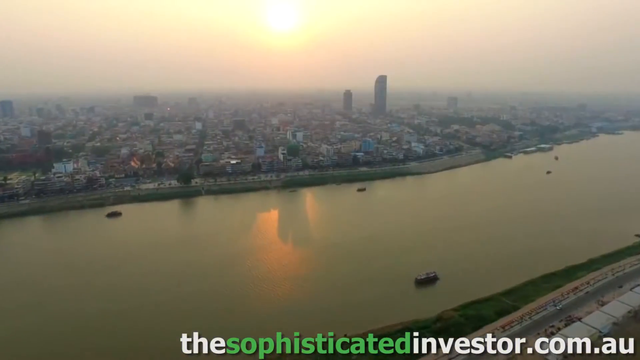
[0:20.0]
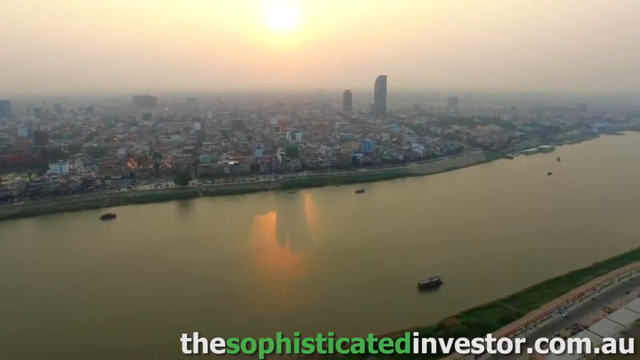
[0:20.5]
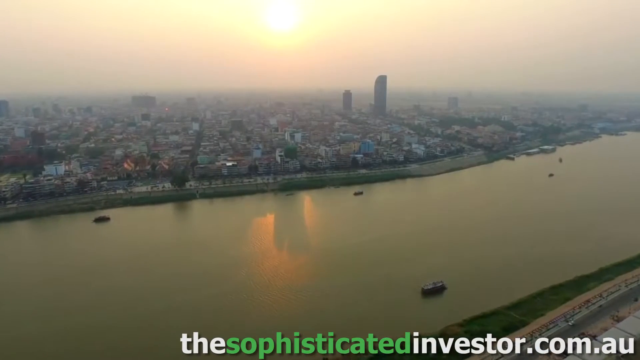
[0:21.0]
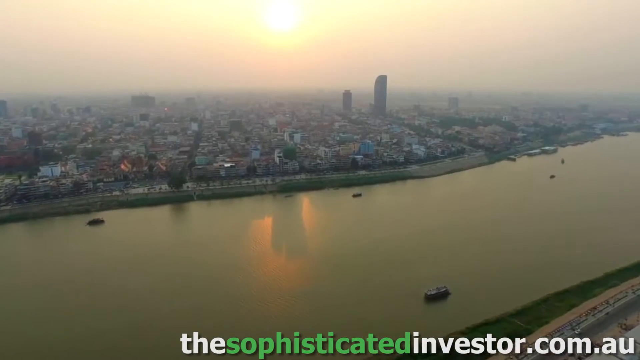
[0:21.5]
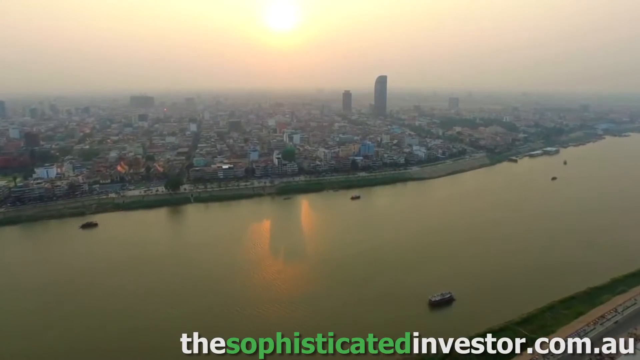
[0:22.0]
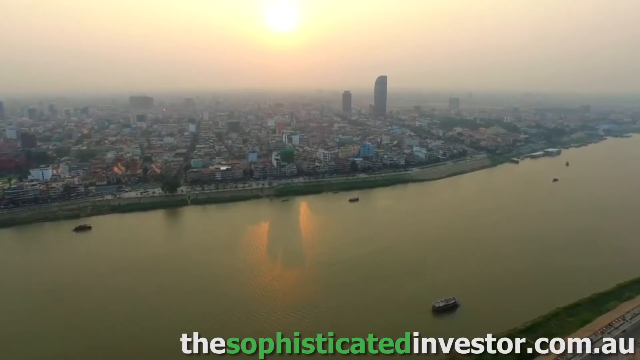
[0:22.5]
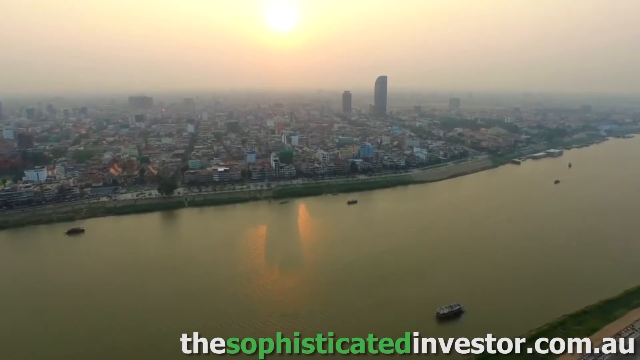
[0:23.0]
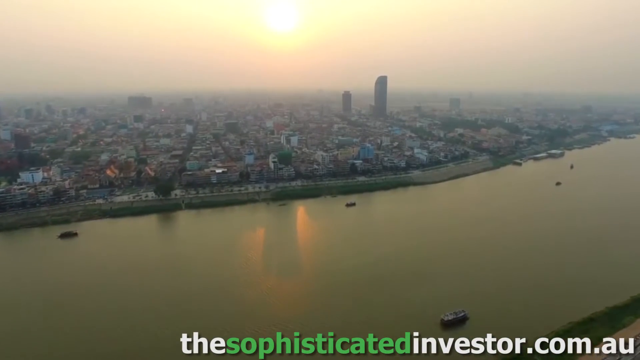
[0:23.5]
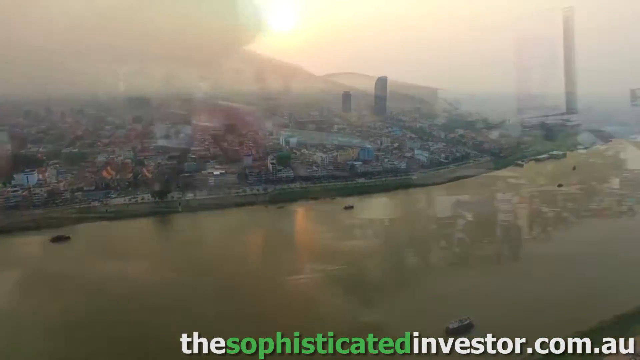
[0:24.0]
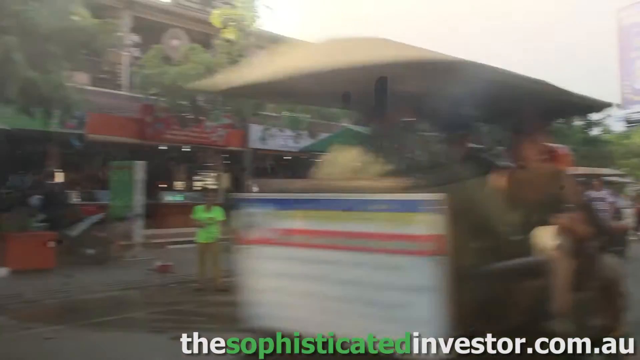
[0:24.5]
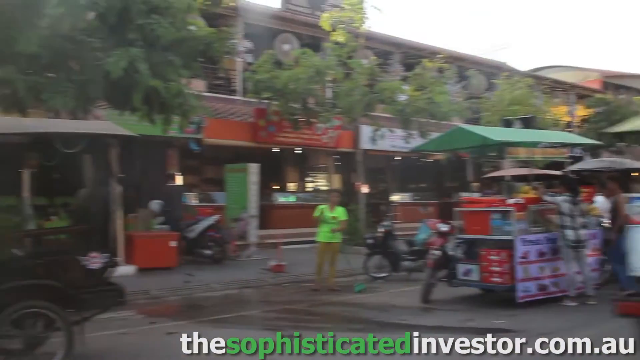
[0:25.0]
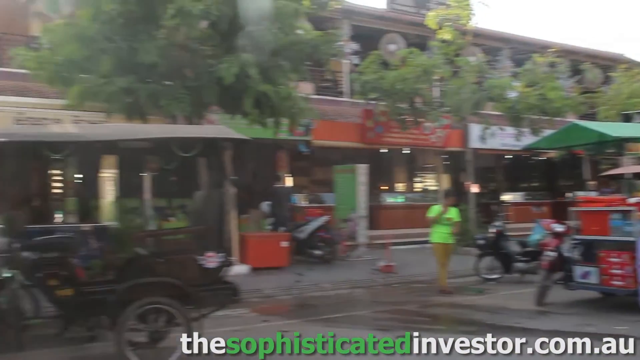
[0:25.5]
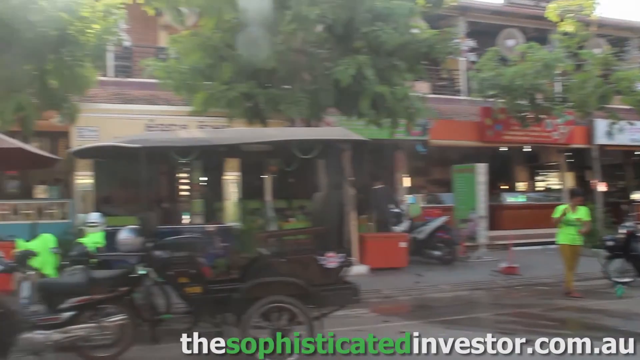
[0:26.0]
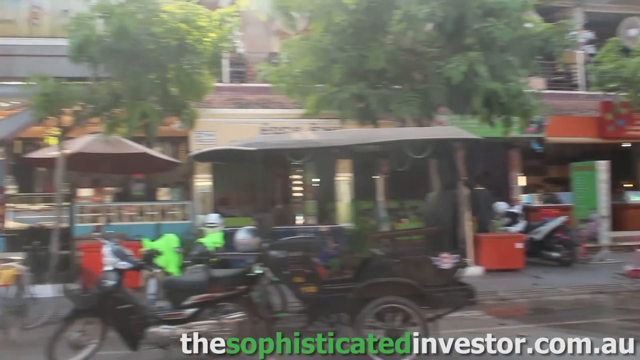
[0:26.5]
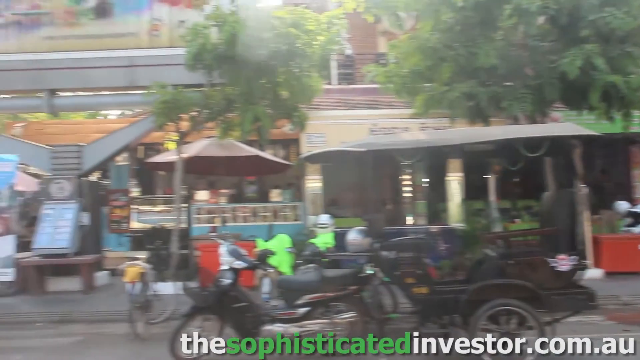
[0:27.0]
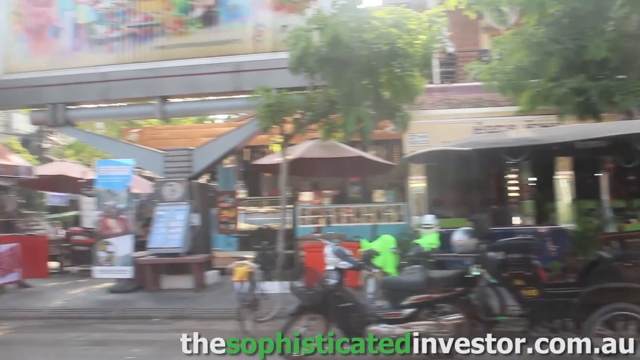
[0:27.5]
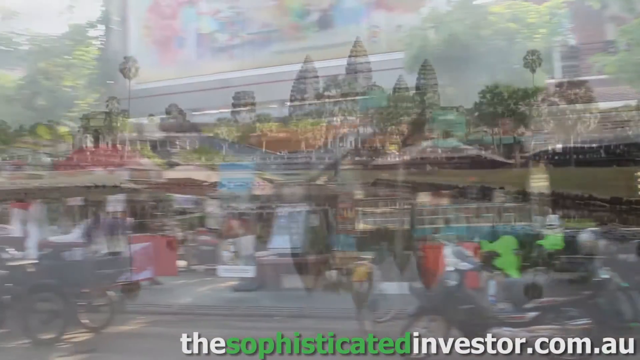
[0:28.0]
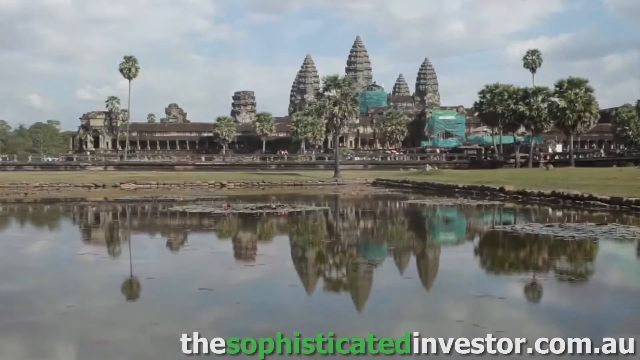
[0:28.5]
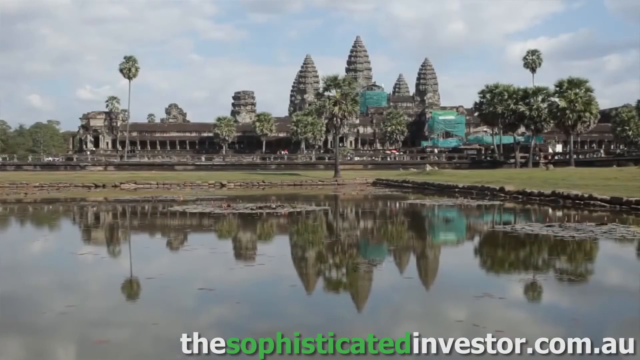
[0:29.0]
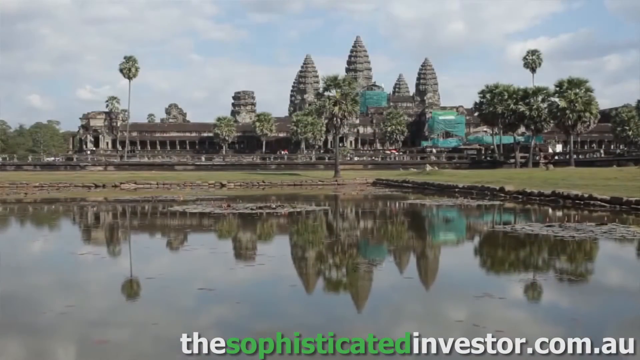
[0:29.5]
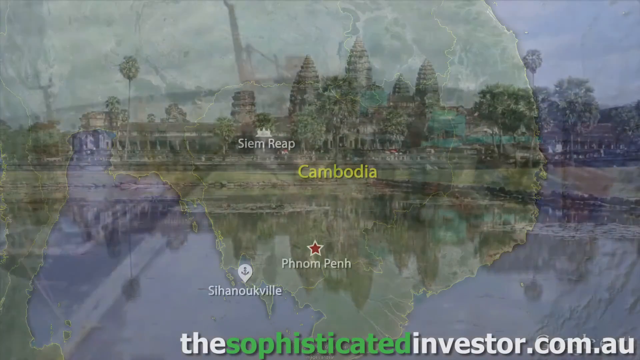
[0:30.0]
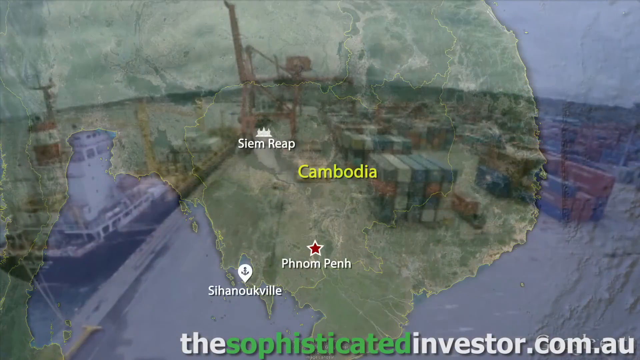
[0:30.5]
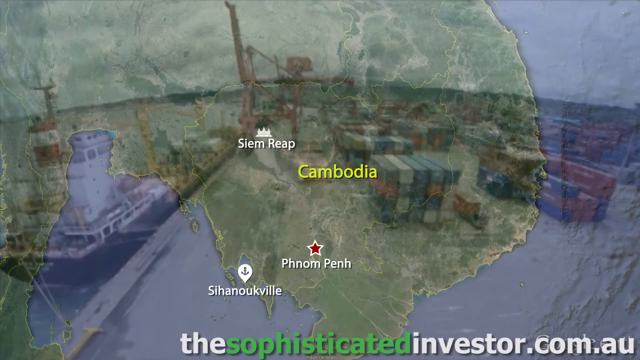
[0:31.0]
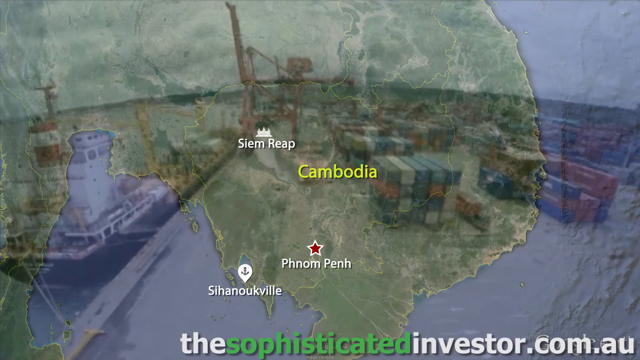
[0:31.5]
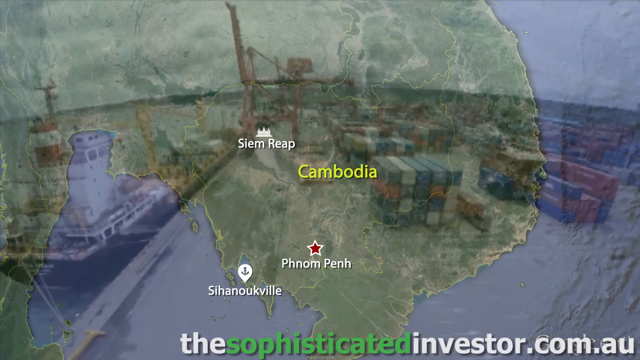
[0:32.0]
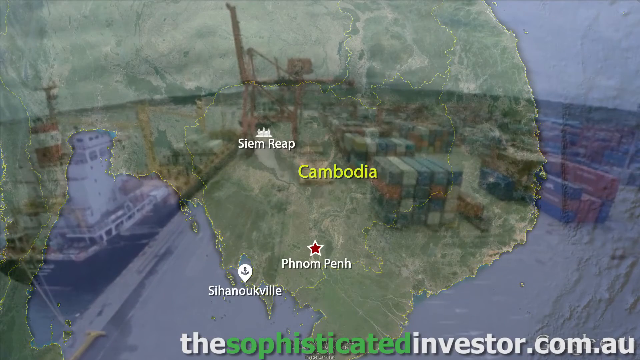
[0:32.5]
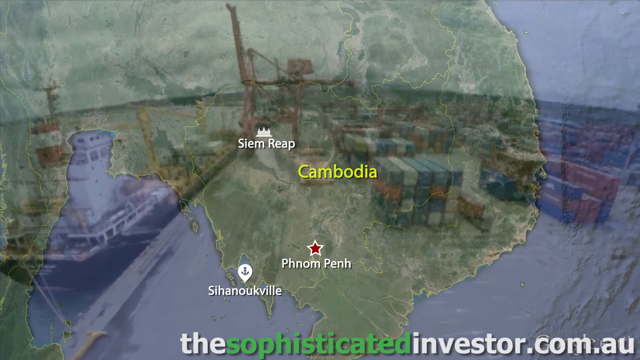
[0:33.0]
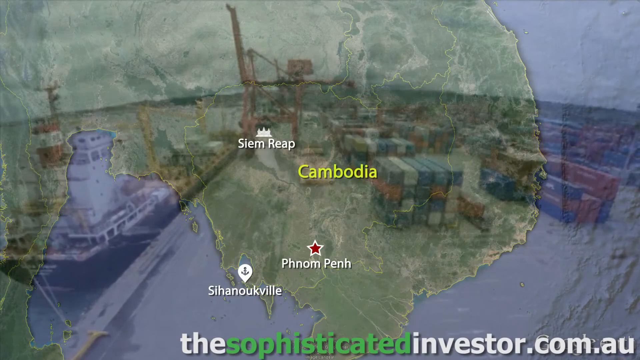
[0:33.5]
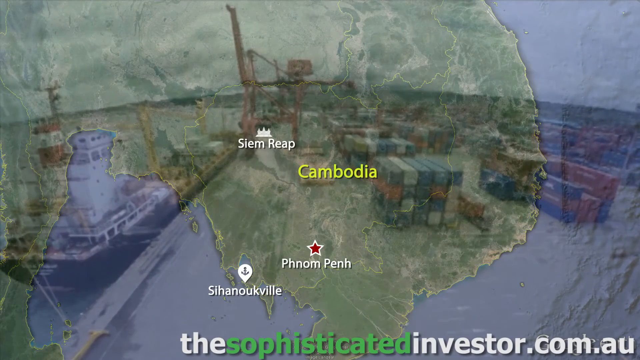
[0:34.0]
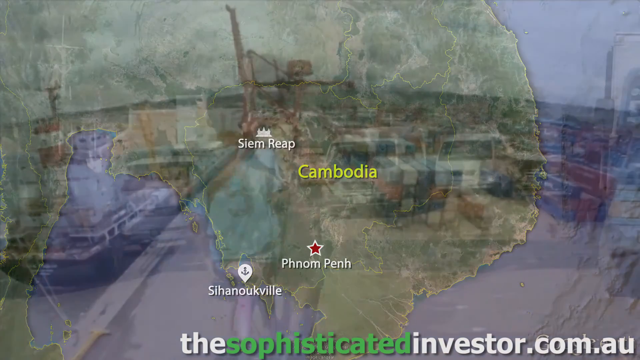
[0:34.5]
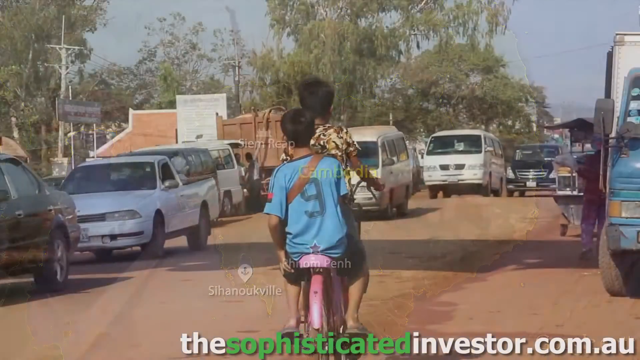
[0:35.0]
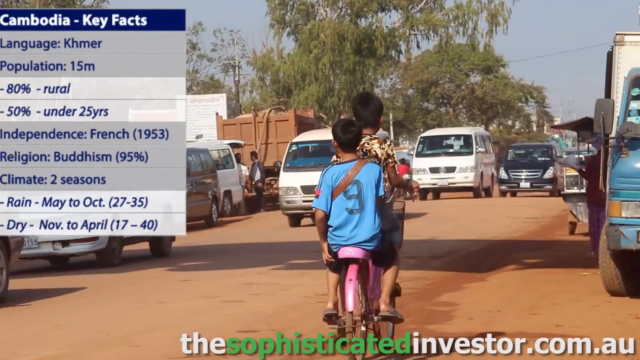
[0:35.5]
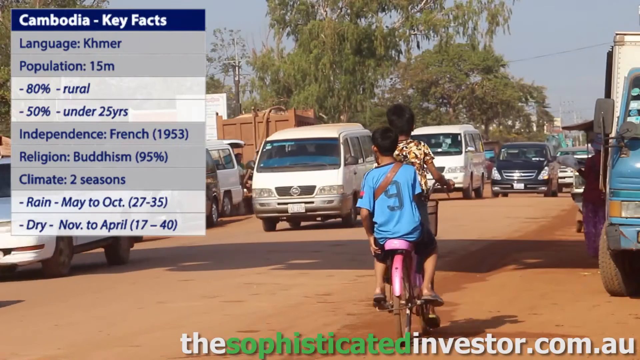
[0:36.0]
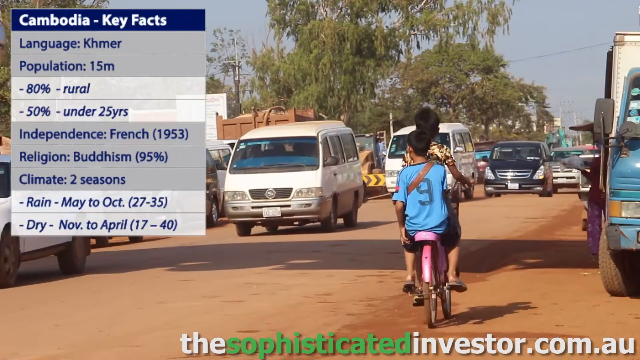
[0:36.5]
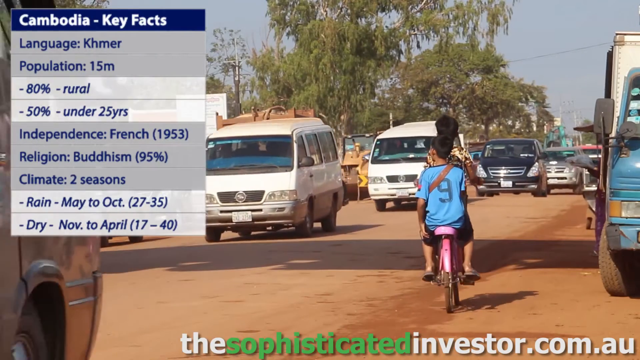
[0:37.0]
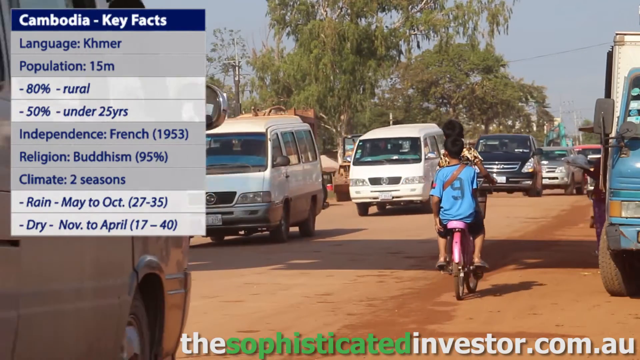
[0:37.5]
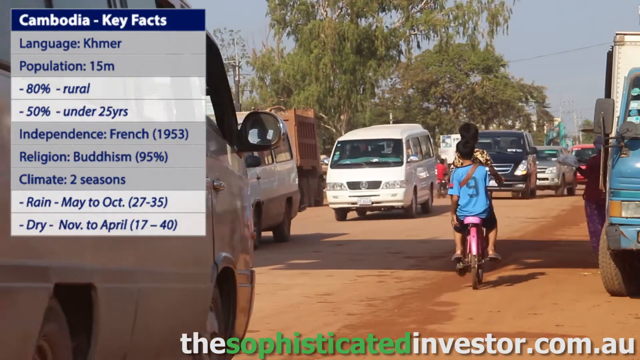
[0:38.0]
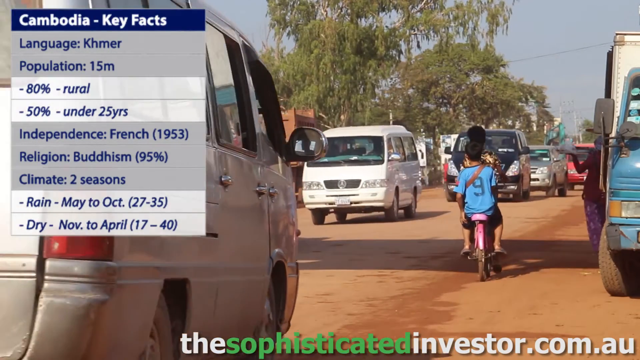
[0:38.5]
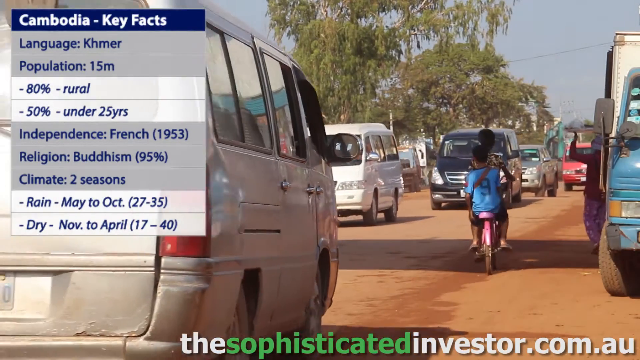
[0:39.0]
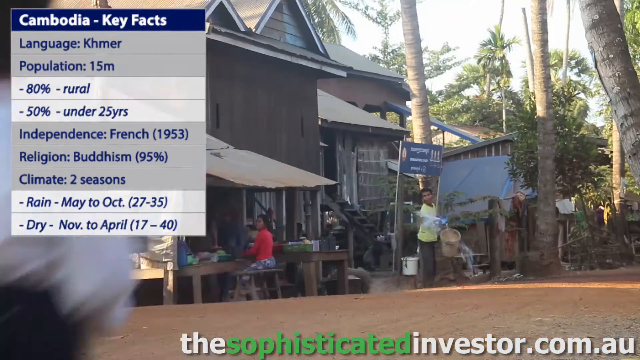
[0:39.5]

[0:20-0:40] An aerial view from about the height of a helicopter looks down on a waterway, possibly a river, with both ends visible. It runs roughly toward two o'clock, from the lower left to about the middle of the right-hand side. A little landmass appears in the lower right-hand corner, and the rest of the land is in the upper left, which is seen best and contains several skyscrapers and other buildings. A few boats are scattered throughout the water. The video then cuts to a street-side view that appears to pan from right to left, showing several storefronts, people walking, and a bunch of signs on the left, likely in front of the stores they belong to. Next comes a map of this region of the world, with Cambodia apparently labeled on it; the land is green and the water around it is blue.